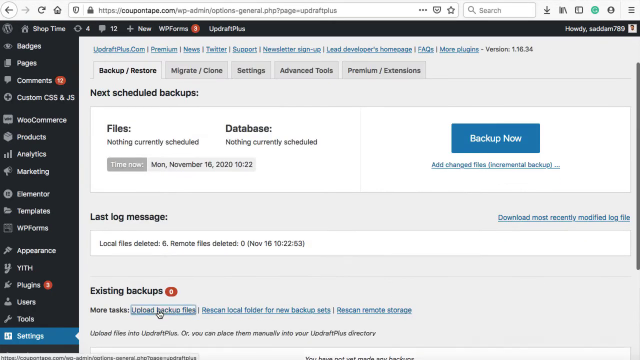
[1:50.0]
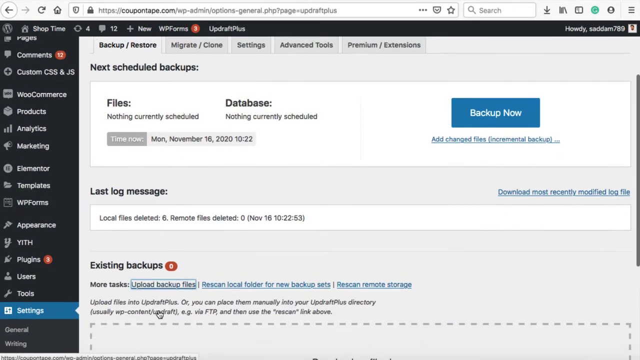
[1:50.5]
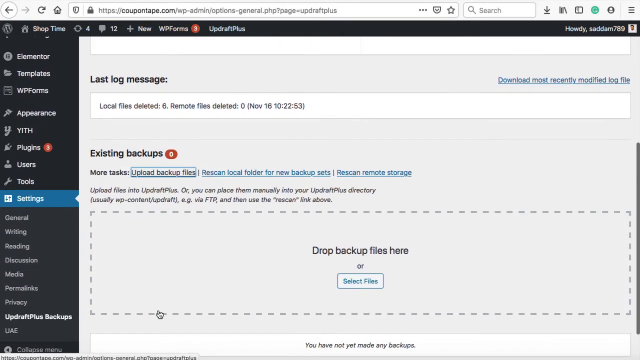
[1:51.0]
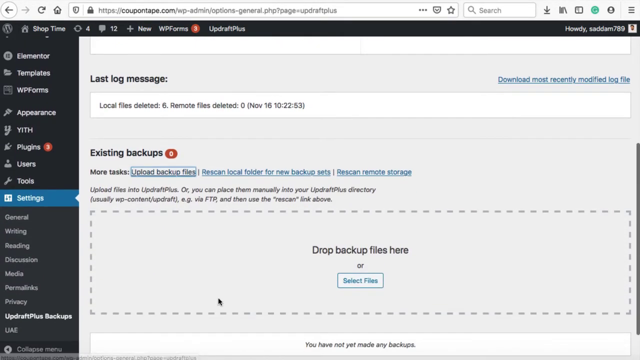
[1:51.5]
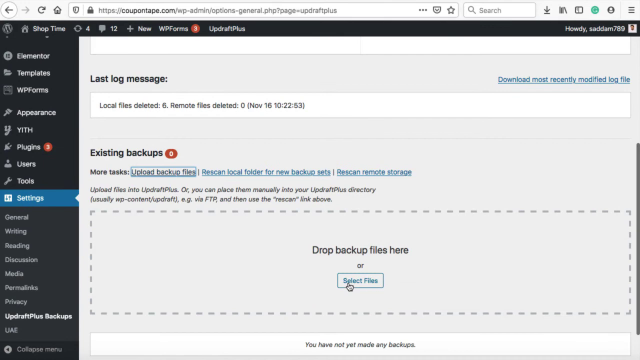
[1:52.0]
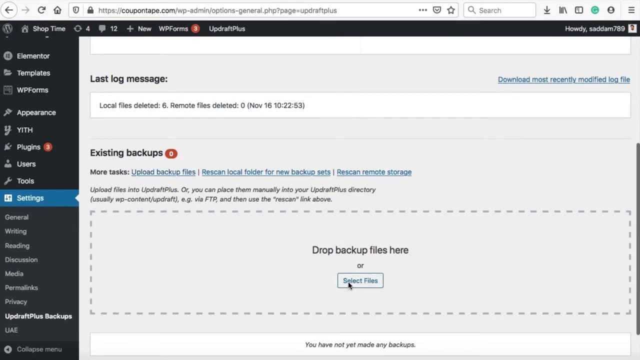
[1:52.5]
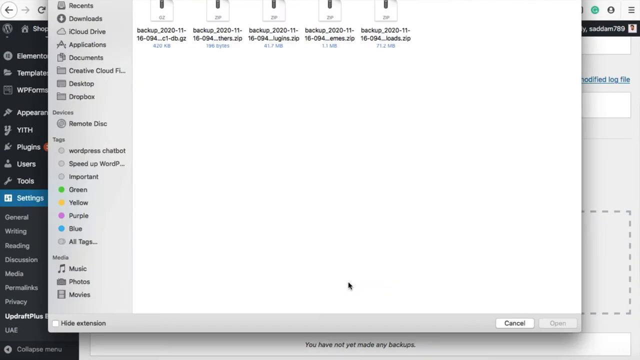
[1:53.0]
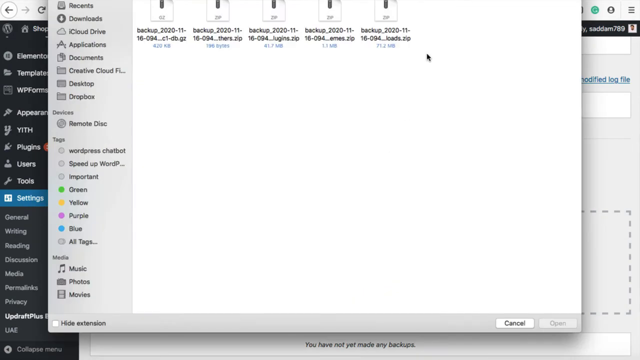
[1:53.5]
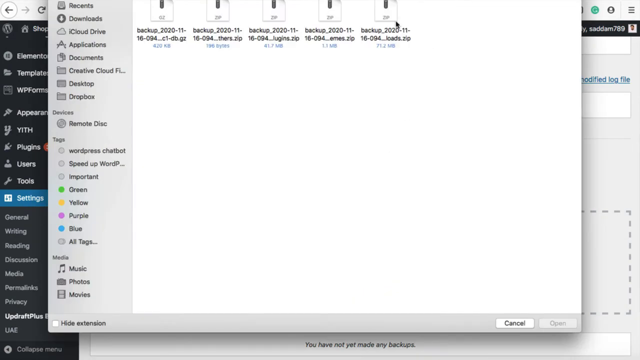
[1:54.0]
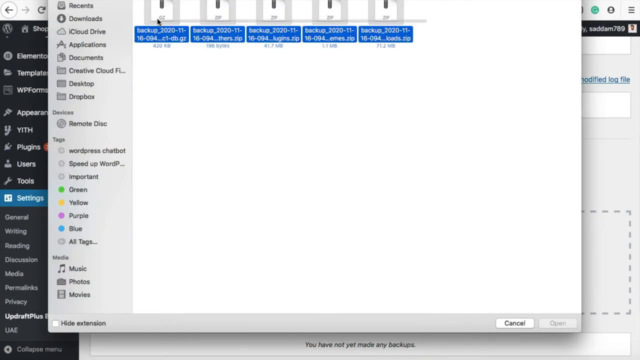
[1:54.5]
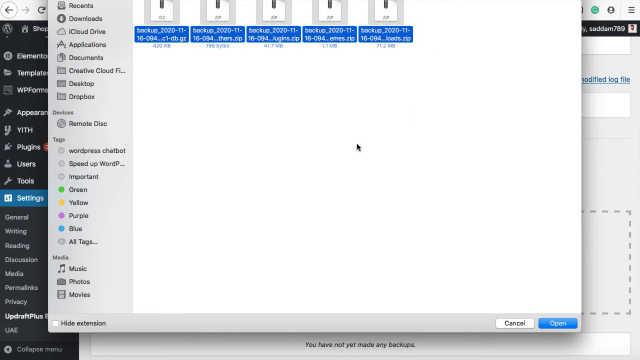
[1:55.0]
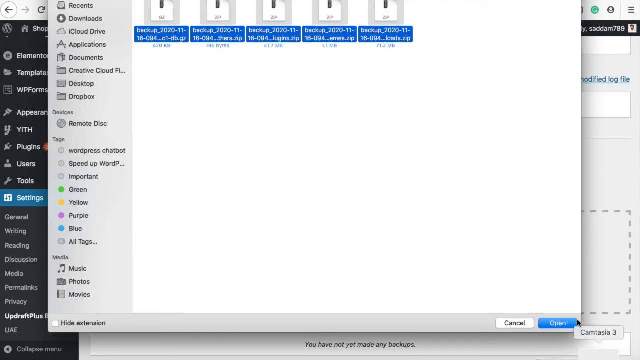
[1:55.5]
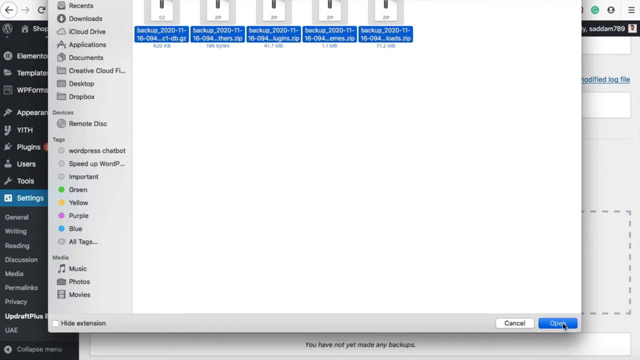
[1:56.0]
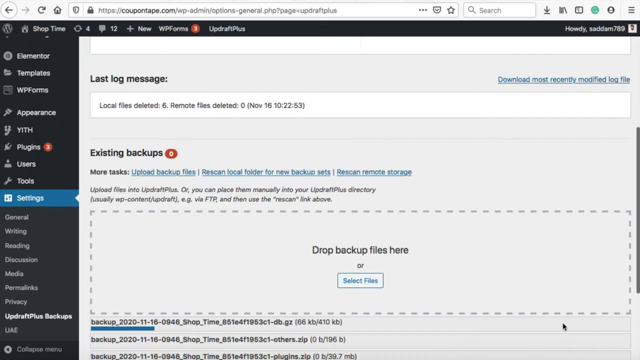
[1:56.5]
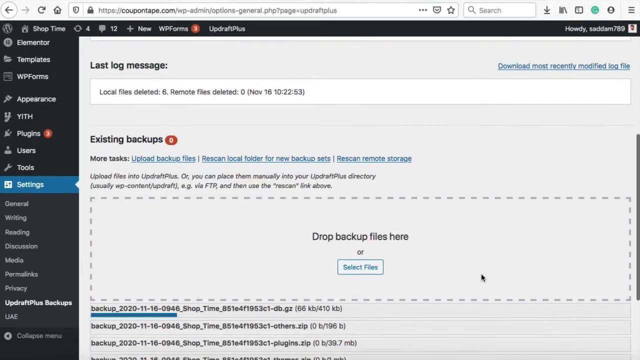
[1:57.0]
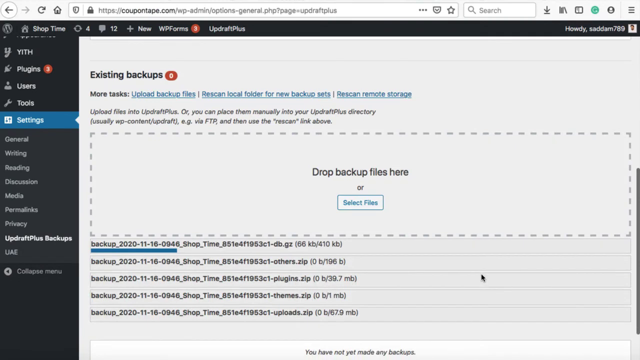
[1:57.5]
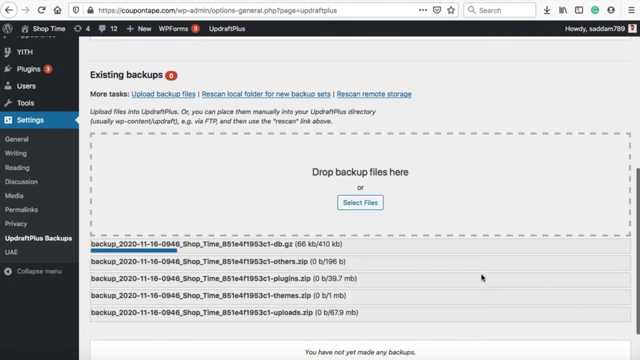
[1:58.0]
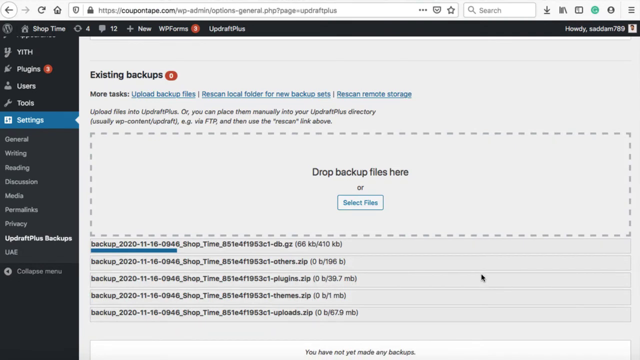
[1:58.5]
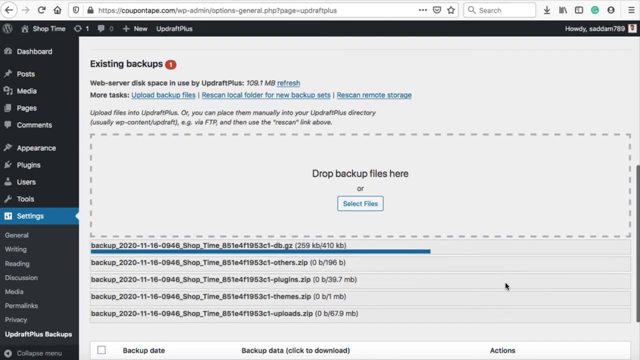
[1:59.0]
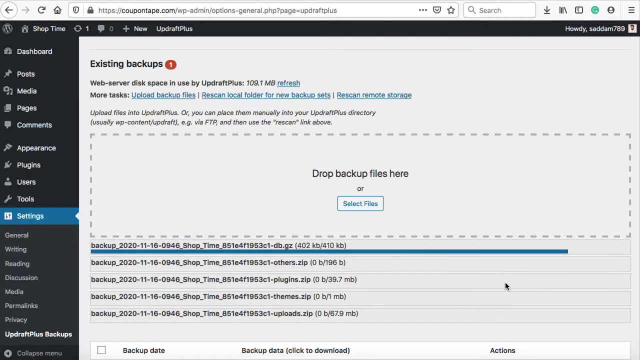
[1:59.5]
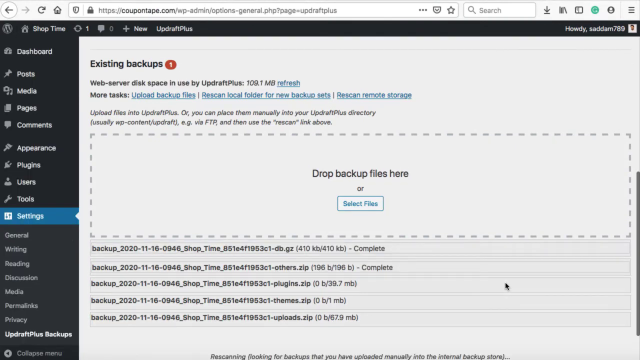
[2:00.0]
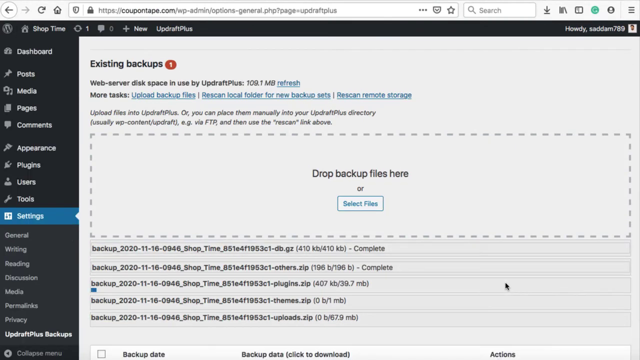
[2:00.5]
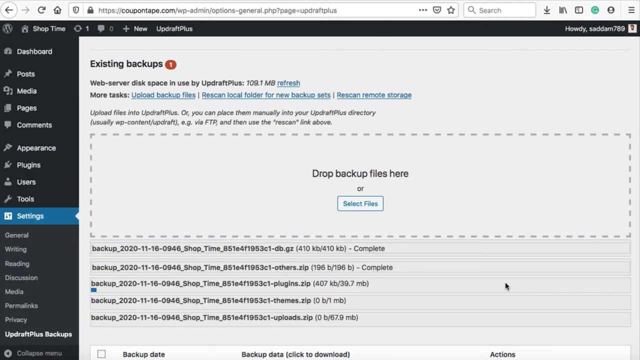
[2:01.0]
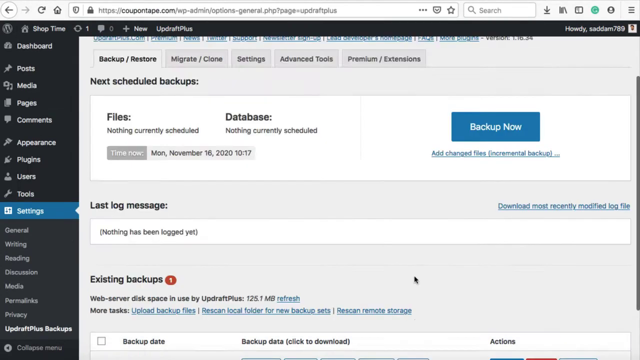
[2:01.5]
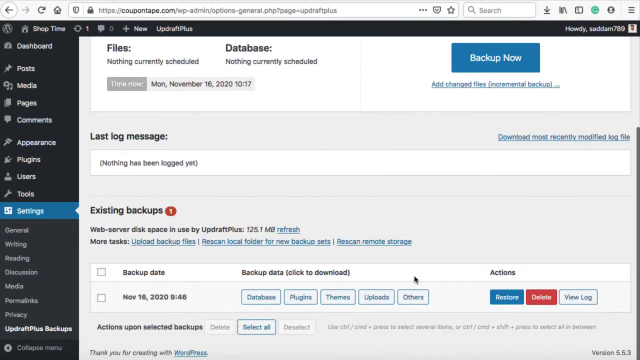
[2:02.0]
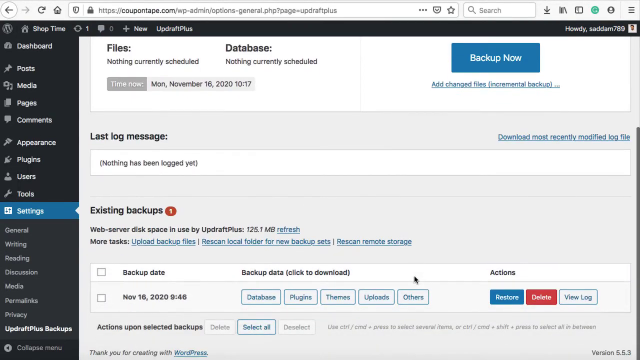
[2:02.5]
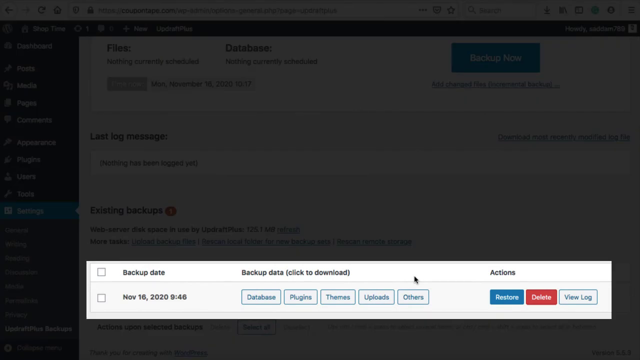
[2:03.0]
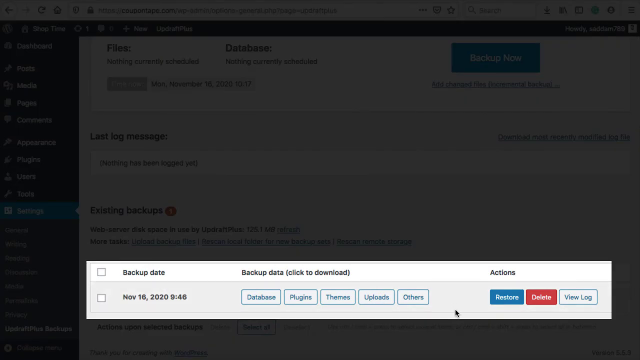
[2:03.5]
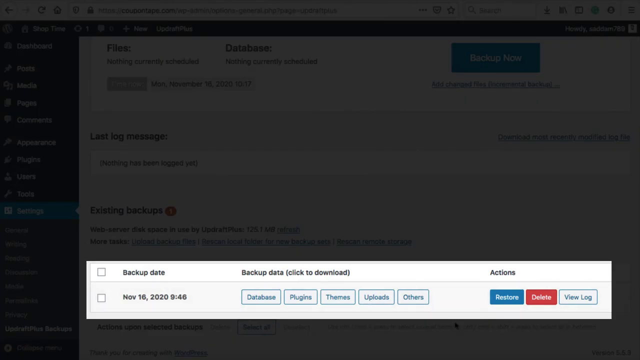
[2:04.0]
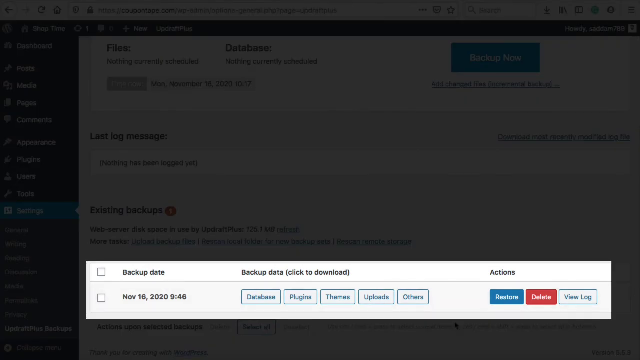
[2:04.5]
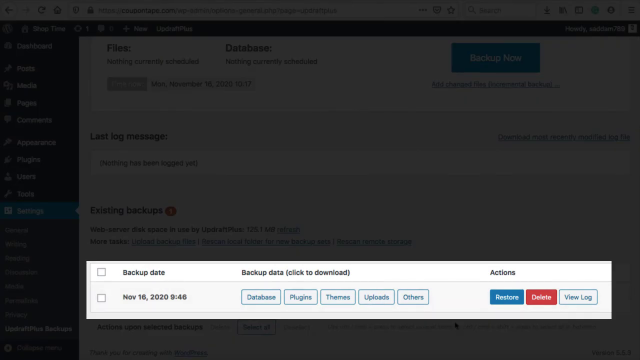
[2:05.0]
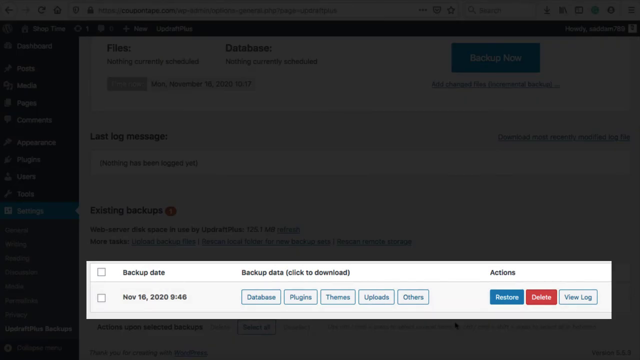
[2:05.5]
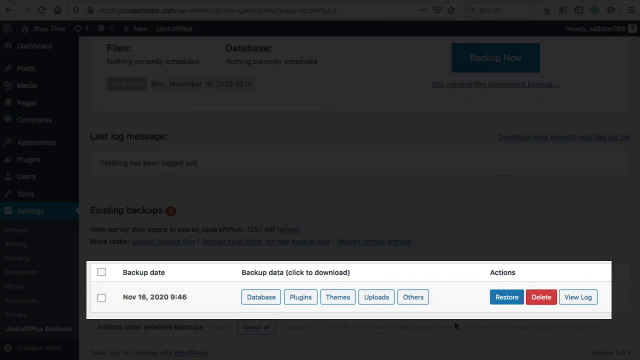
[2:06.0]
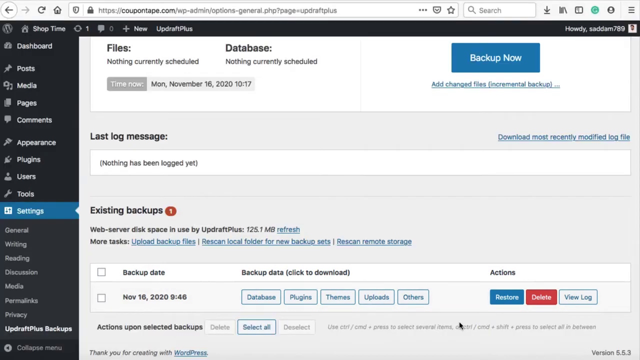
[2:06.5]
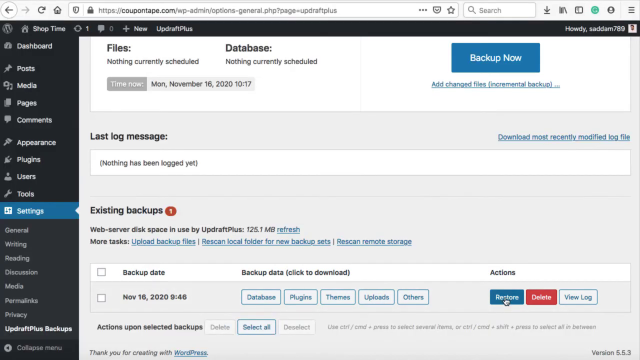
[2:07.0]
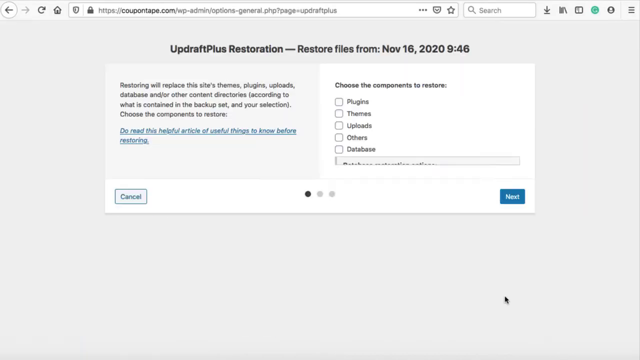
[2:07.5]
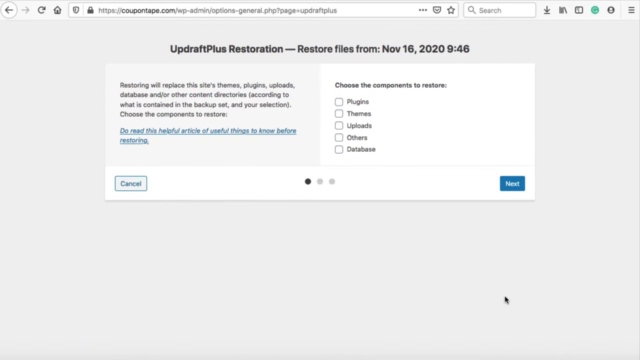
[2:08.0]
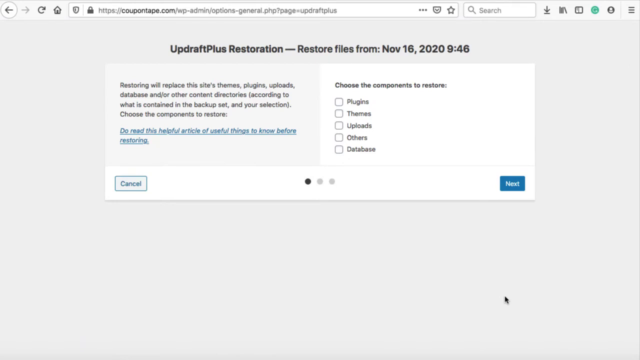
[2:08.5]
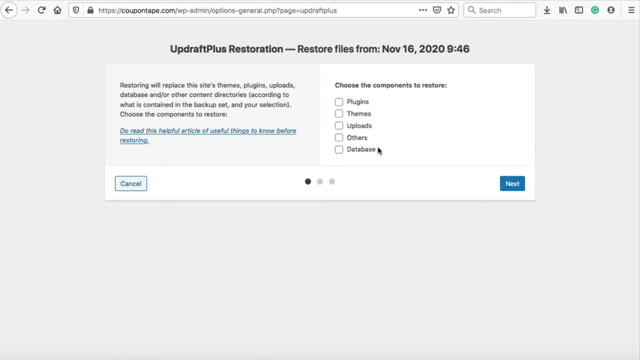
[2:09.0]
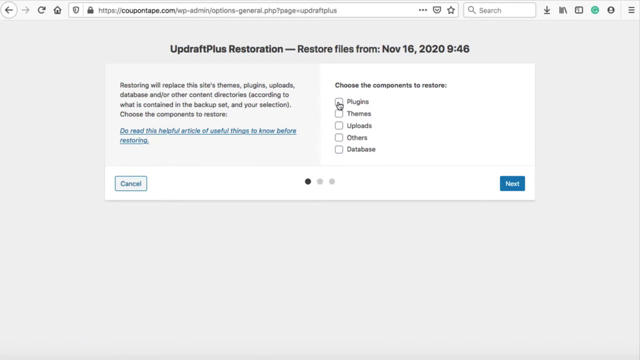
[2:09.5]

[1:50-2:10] A WordPress dashboard is on the backup page, showing "next scheduled backups." The person scrolls down to a box that says "drop backup files here." They click a button and a window opens showing folders, probably saved on their hard drive. They highlight the files and start uploading; upload bars underneath turn blue and disappear, and "complete" appears next to each file. The person scrolls down and a section with a table is highlighted, showing backup date, backup data, and actions, with three action buttons: restore, delete, or view logs. The person clicks restore, and black text reads "Updraft Plus restoration restore files from November 16, 2020 946." They check the themes box and go back. The hard drive window has a sidebar on the left with links reading recents, downloads, iCloud drive, applications, documents, creative cloud, desktop, and dropbox, a devices section with the text "remote disk," and tags: green, yellow, purple, blue, all tags, important, speed up, and WordPress chat bot.